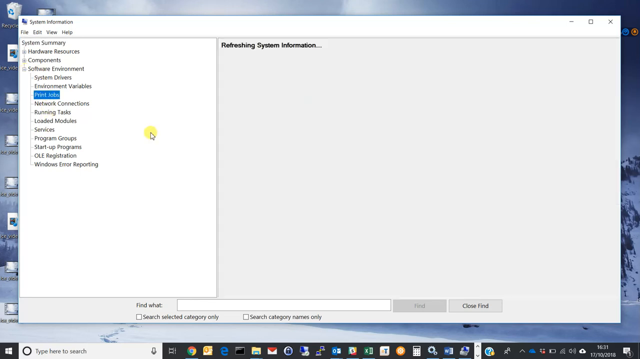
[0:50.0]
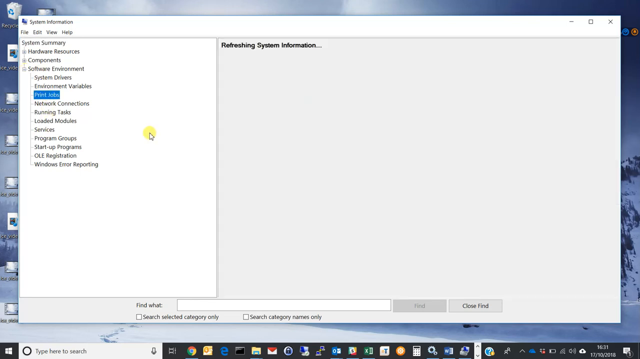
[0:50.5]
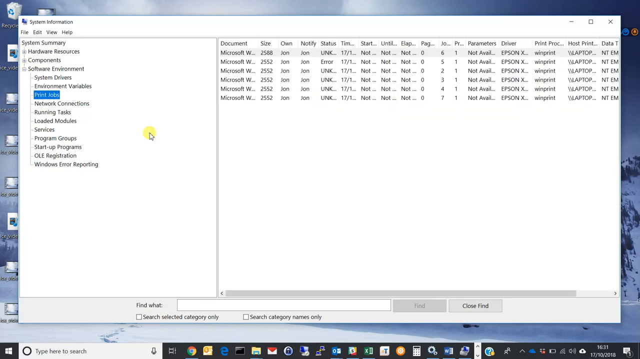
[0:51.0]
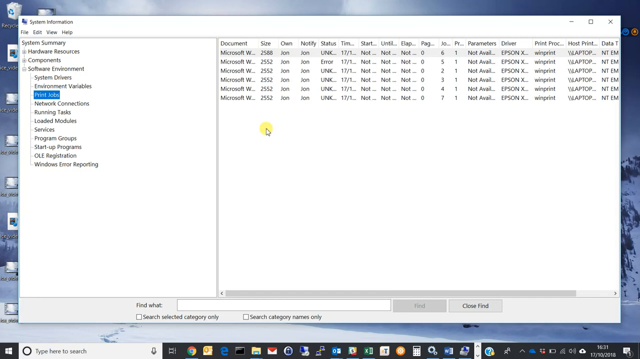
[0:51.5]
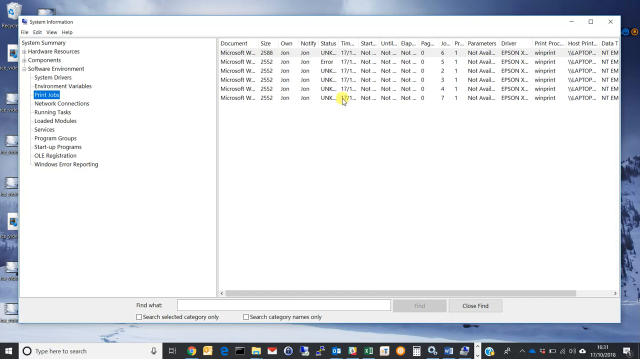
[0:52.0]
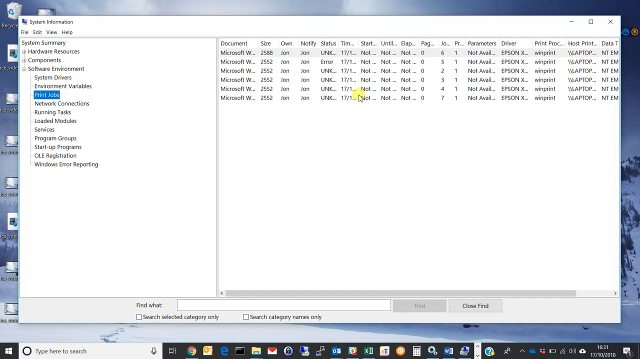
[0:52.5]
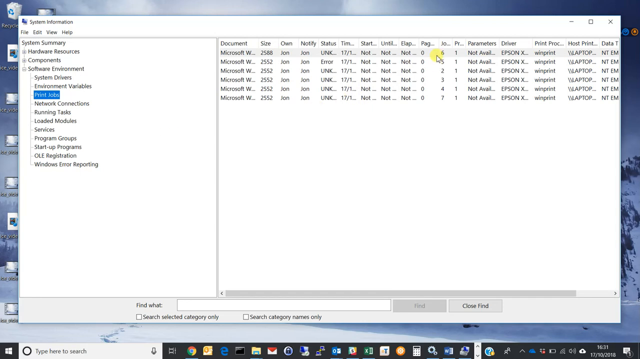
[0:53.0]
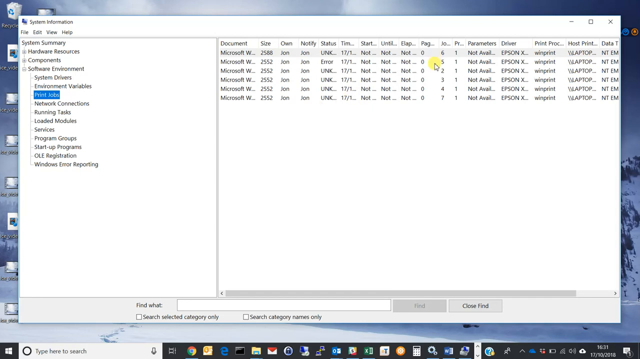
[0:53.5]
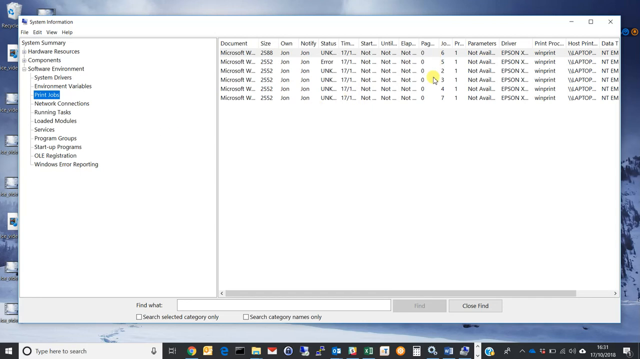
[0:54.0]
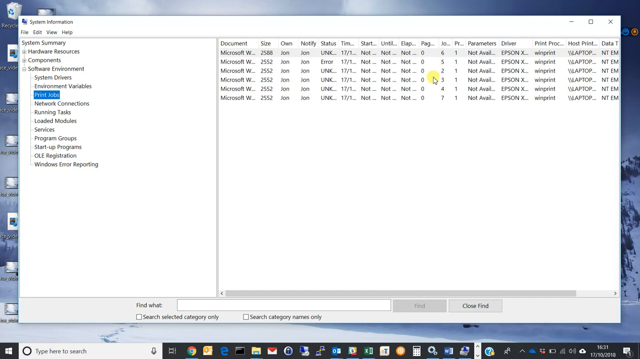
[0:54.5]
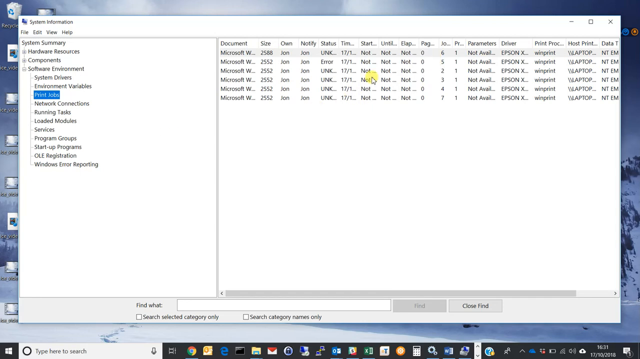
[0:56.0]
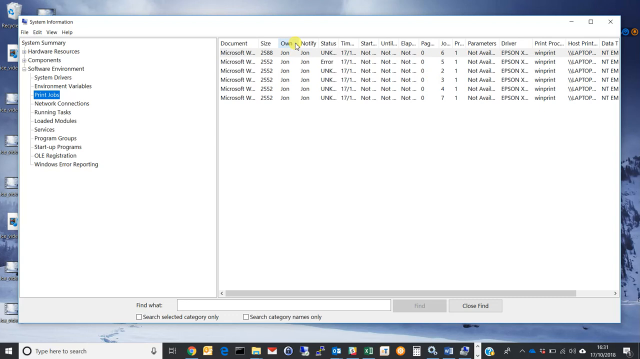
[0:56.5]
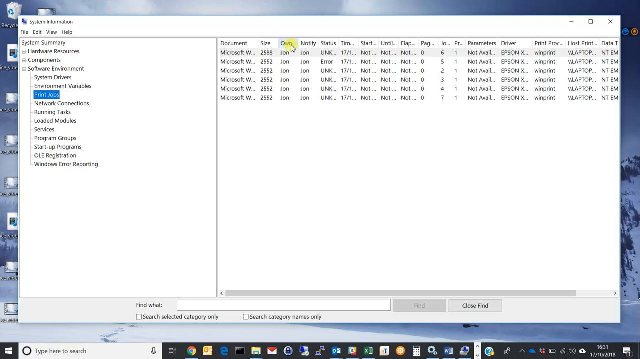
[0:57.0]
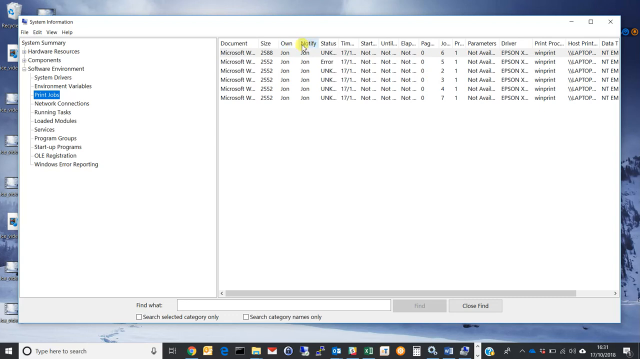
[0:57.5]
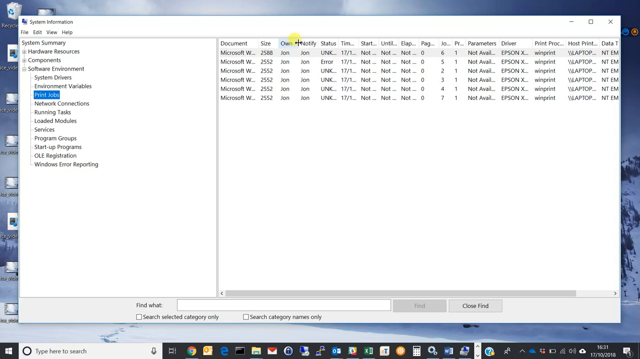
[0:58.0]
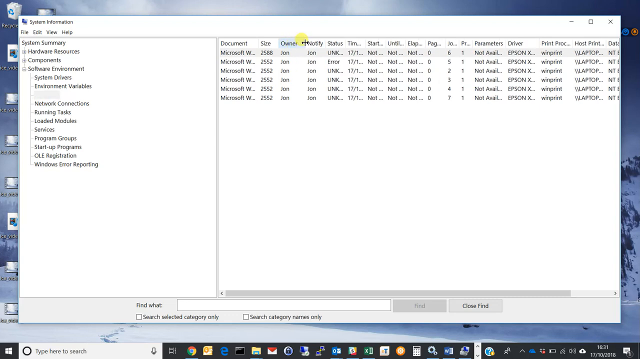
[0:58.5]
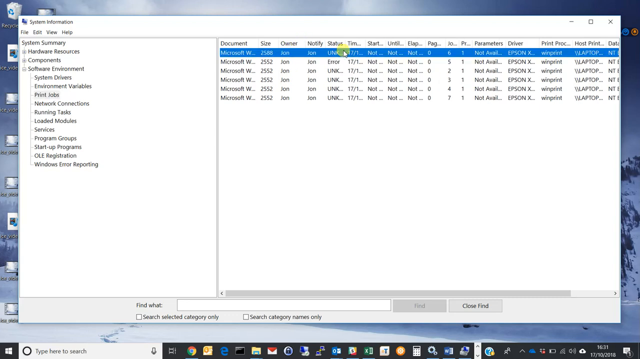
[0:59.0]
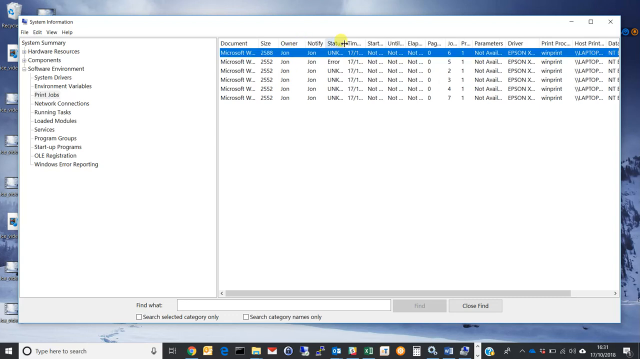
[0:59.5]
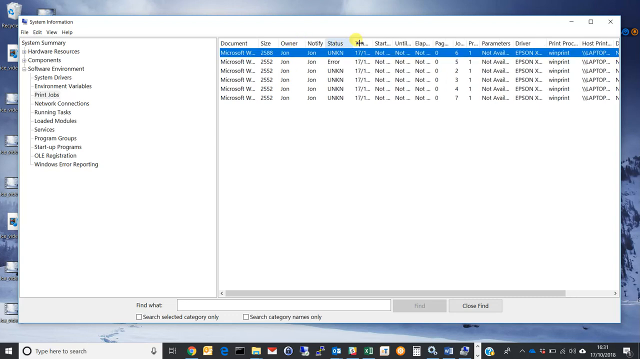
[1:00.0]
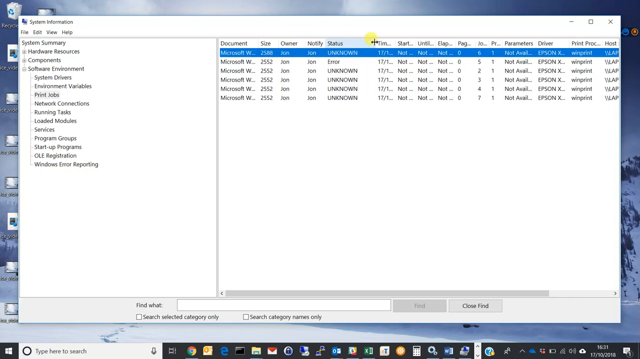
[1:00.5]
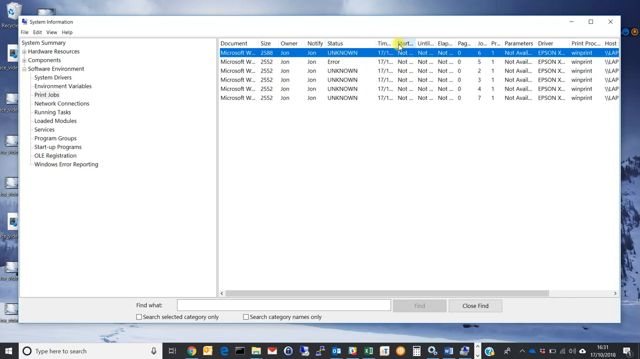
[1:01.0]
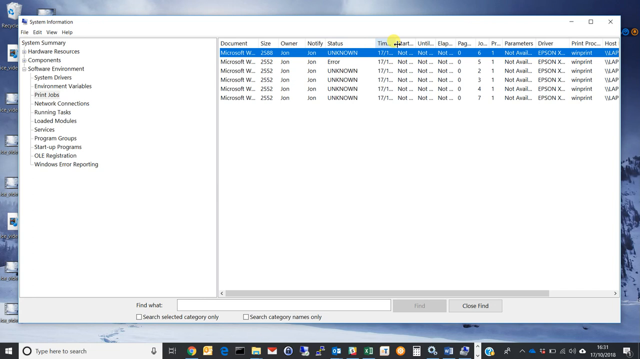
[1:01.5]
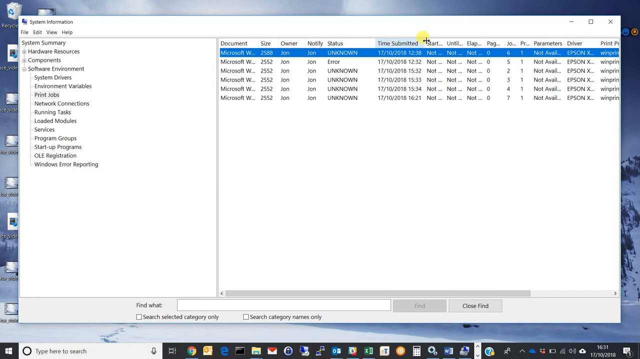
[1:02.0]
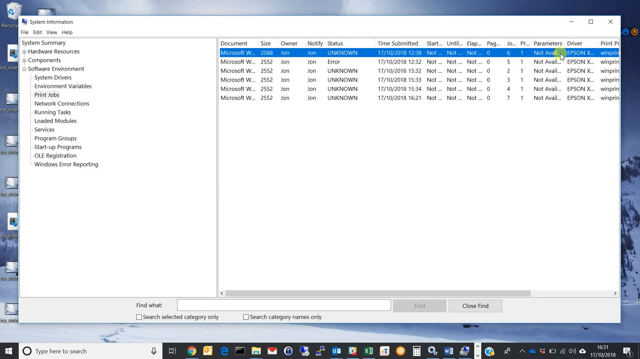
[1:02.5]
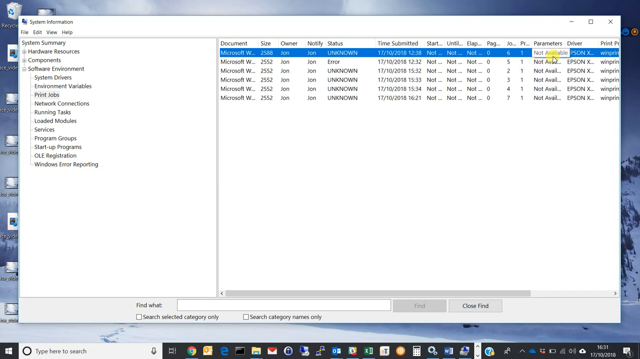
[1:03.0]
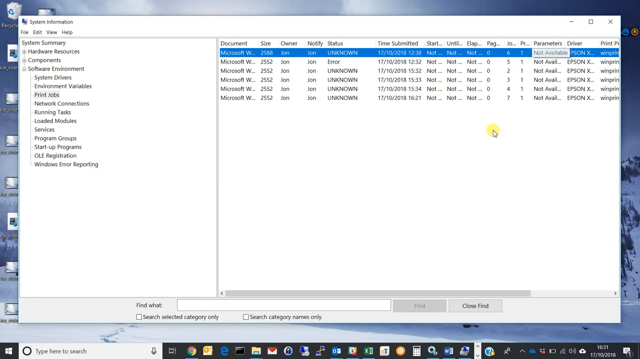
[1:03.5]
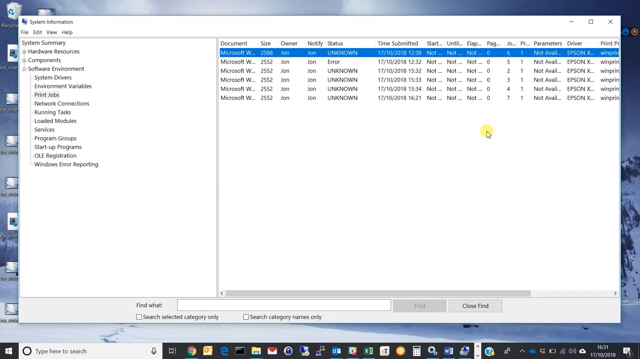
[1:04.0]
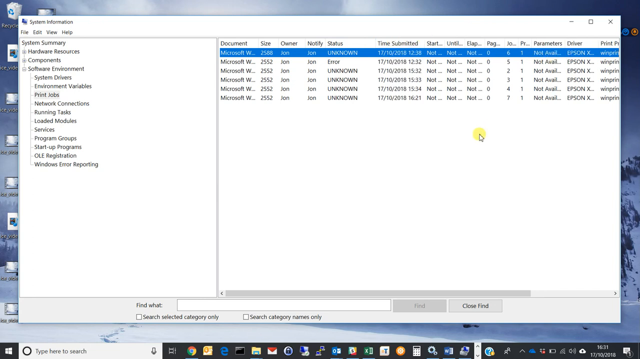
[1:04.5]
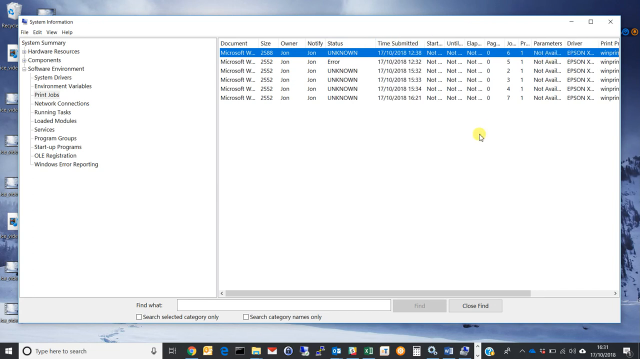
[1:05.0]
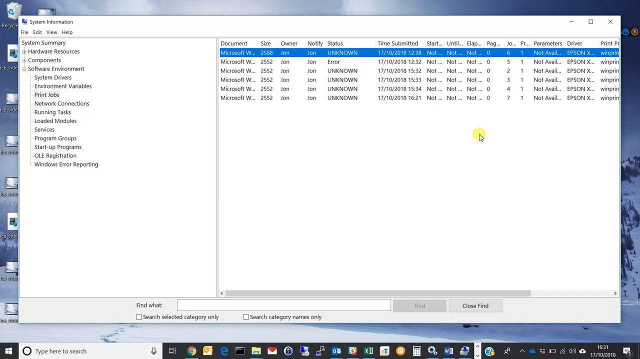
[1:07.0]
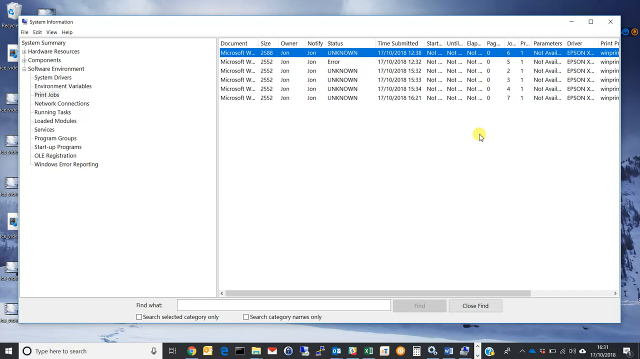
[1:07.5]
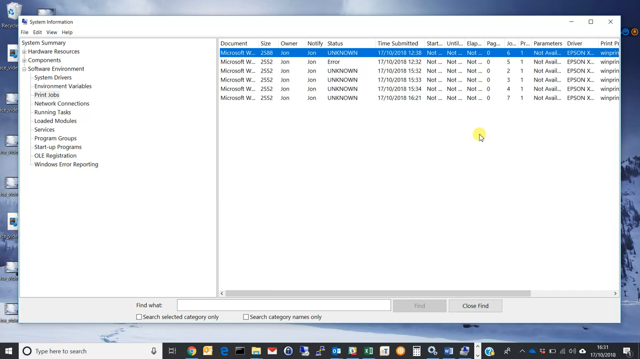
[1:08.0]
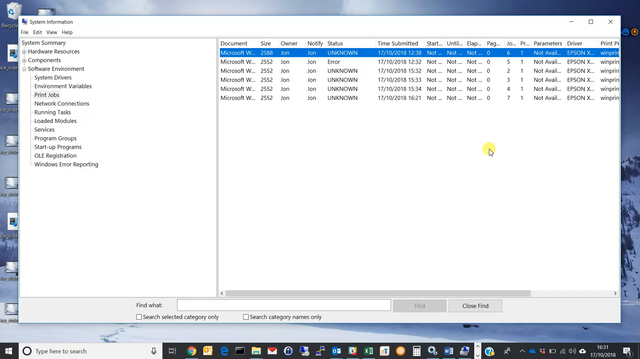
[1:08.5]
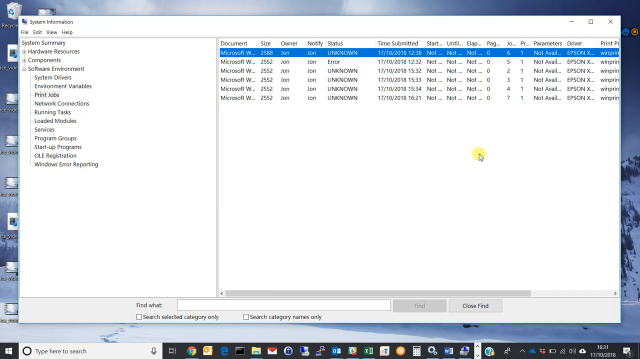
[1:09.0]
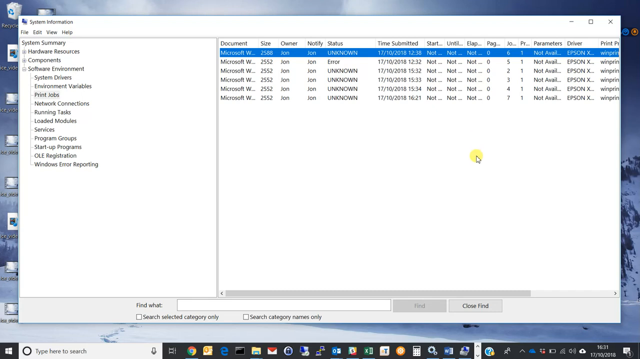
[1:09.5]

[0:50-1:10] With the Print Jobs window open, the mouse cursor moves across the options on the right-hand side of the System Information panel and clicks the first listed entry, which says "Microsoft" along with various status indicators. It then moves to the section called Owner and expands it, then does the same with the Status section and the Time Submitted section, so that each piece of information in those columns is fully visible, including the times the jobs were printed. The user appears to be looking for particular details in their print job history.